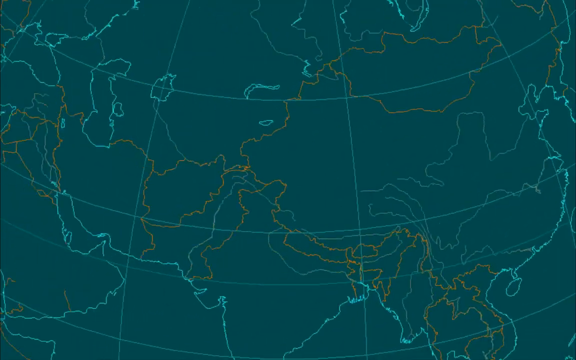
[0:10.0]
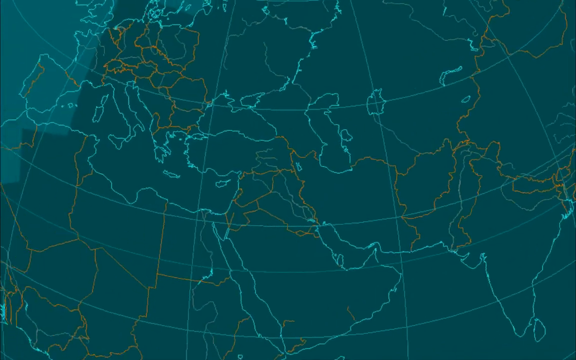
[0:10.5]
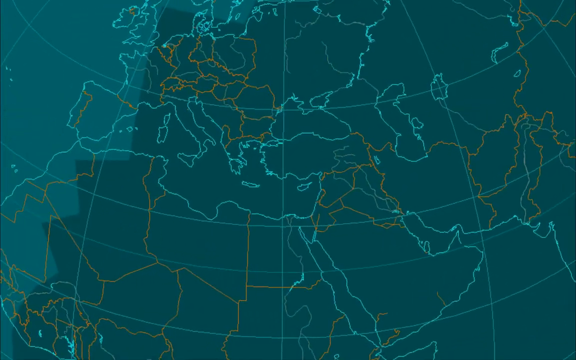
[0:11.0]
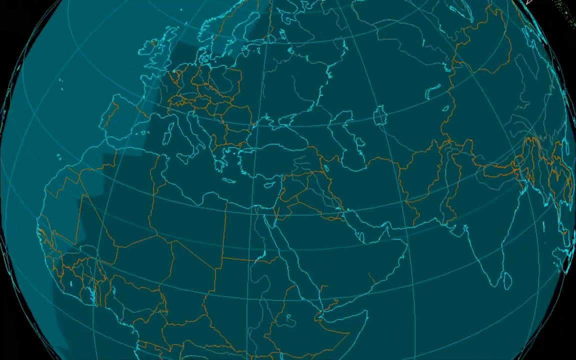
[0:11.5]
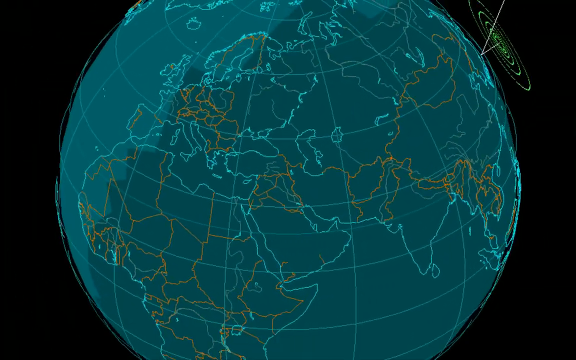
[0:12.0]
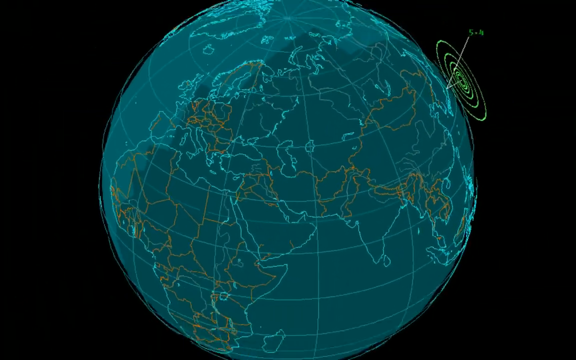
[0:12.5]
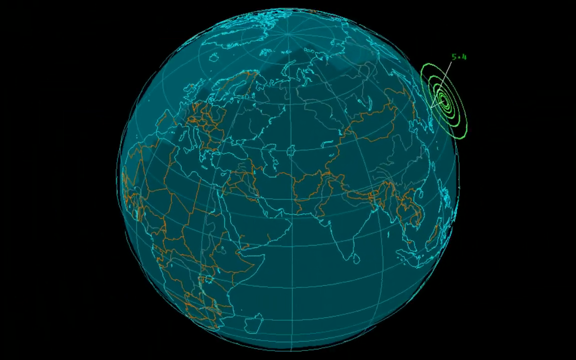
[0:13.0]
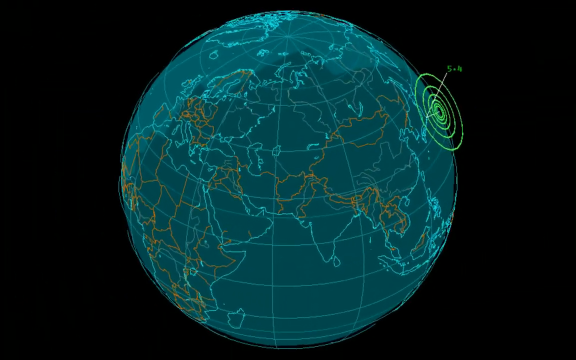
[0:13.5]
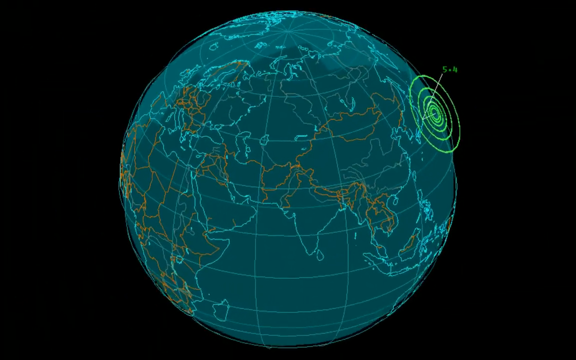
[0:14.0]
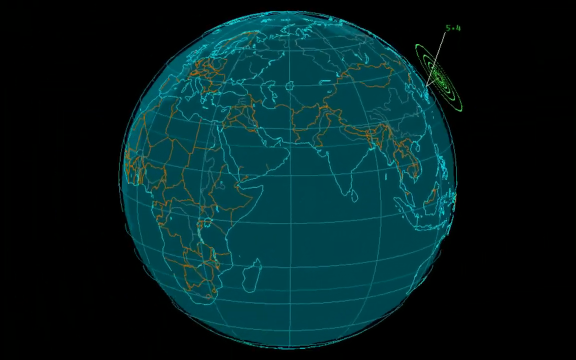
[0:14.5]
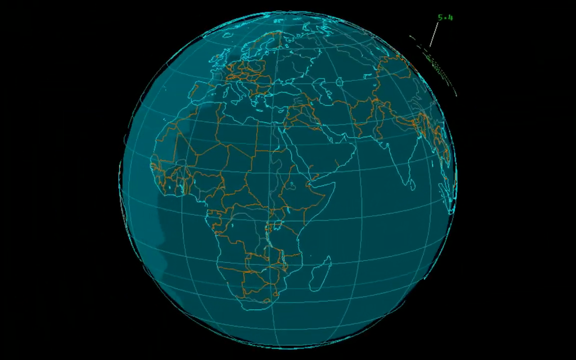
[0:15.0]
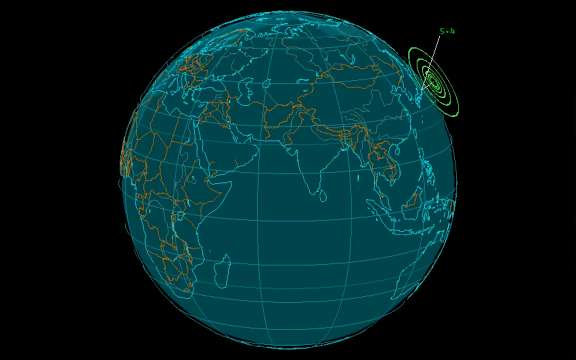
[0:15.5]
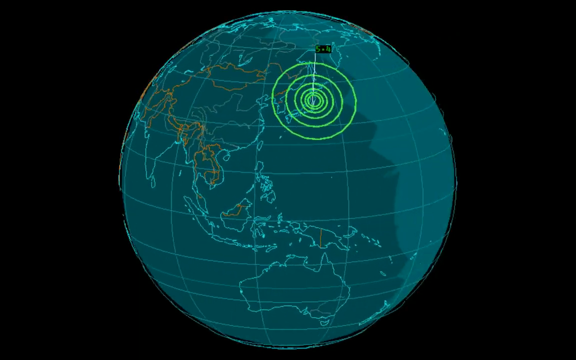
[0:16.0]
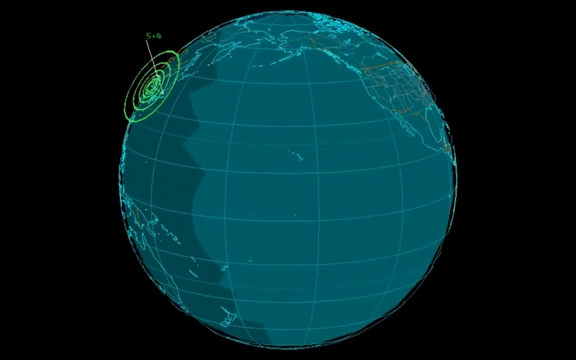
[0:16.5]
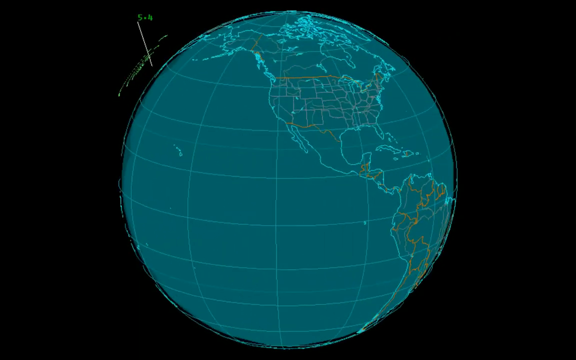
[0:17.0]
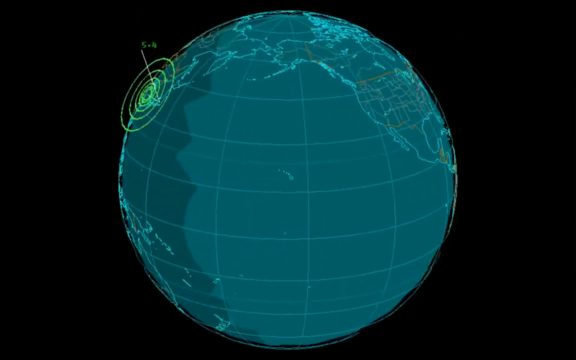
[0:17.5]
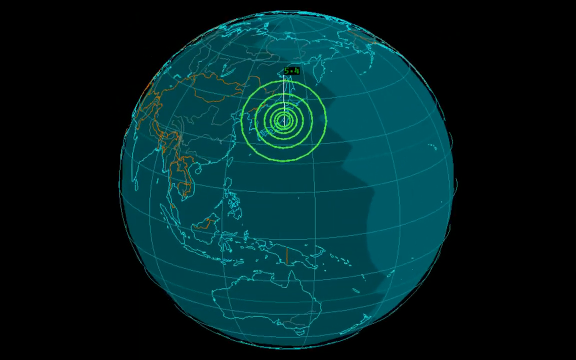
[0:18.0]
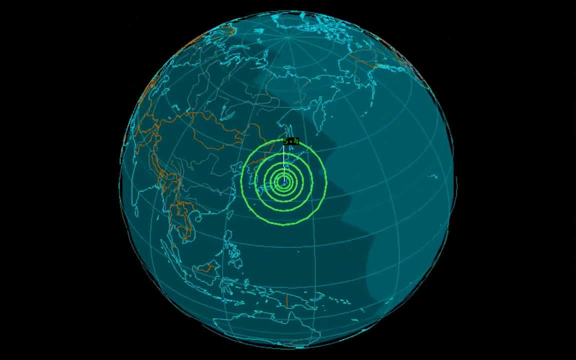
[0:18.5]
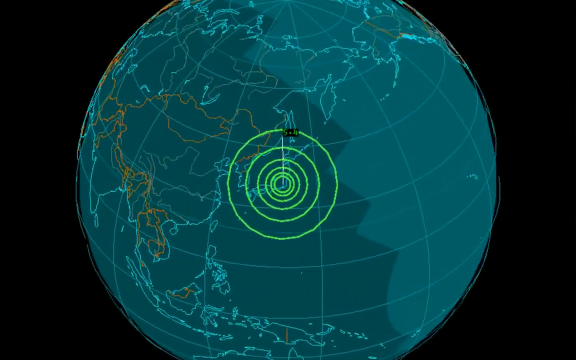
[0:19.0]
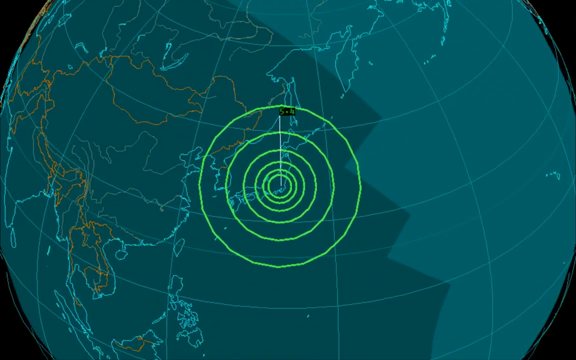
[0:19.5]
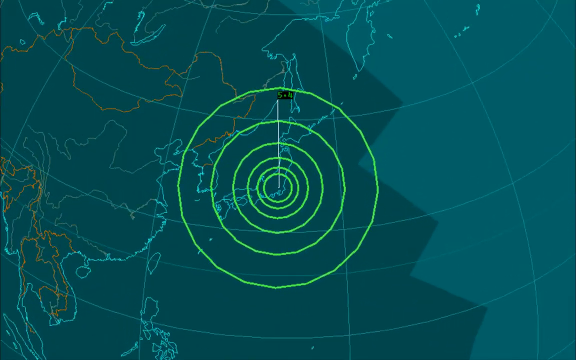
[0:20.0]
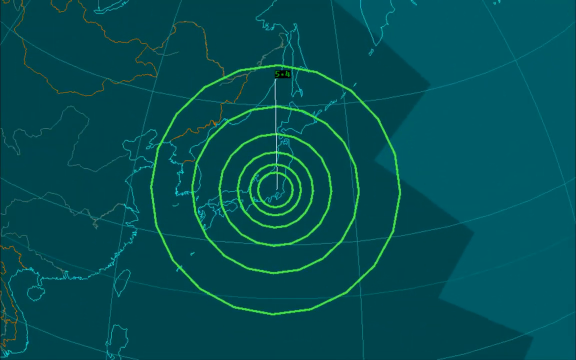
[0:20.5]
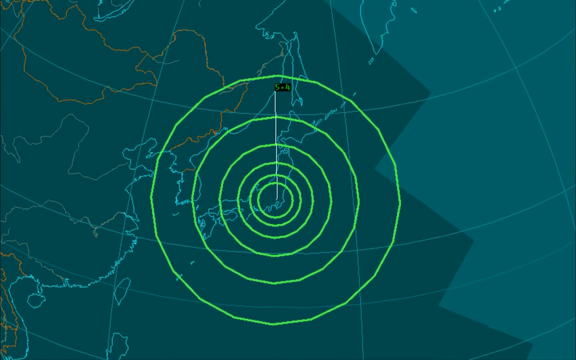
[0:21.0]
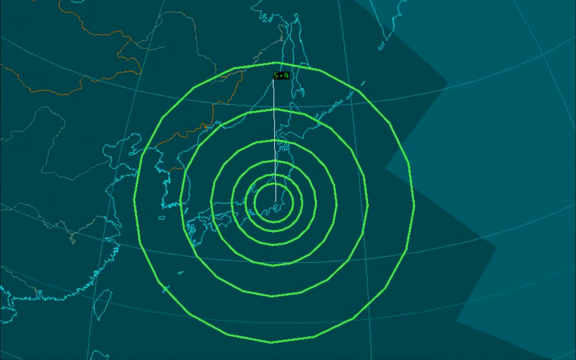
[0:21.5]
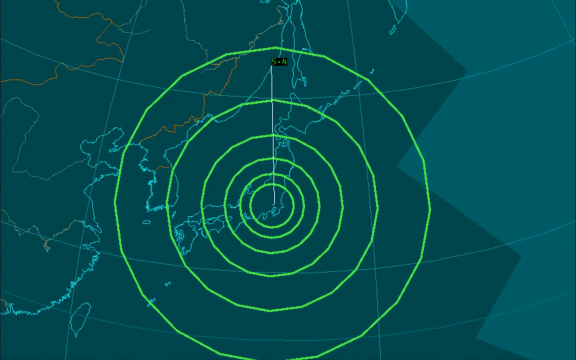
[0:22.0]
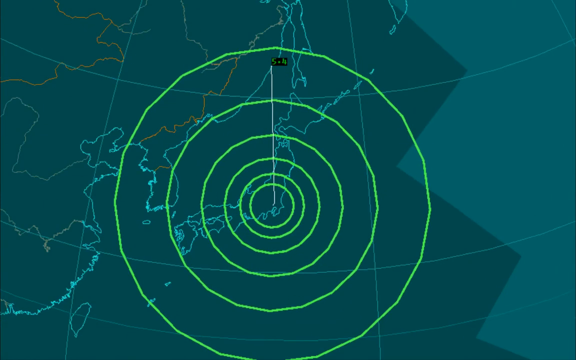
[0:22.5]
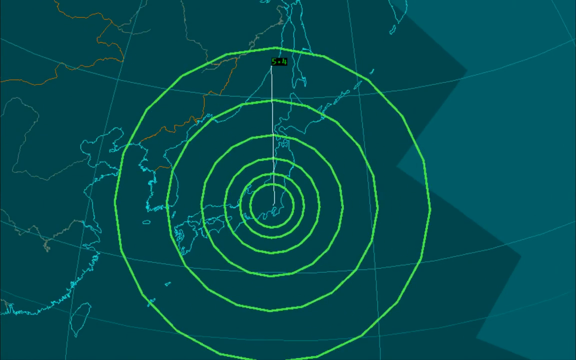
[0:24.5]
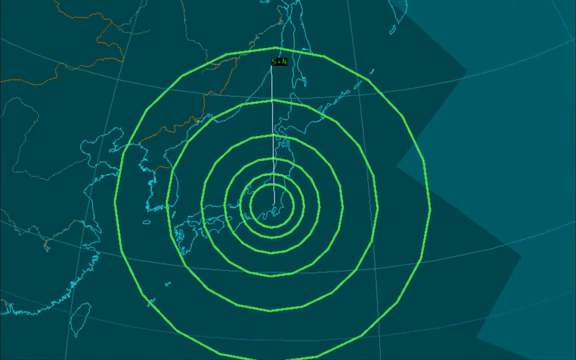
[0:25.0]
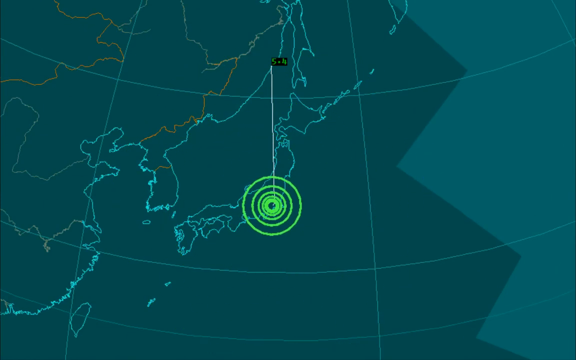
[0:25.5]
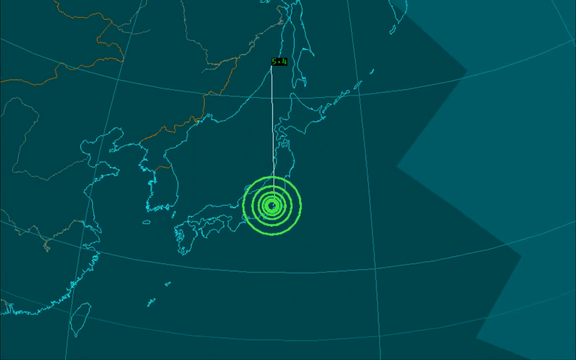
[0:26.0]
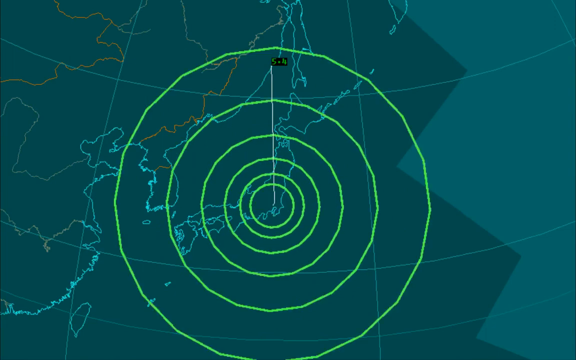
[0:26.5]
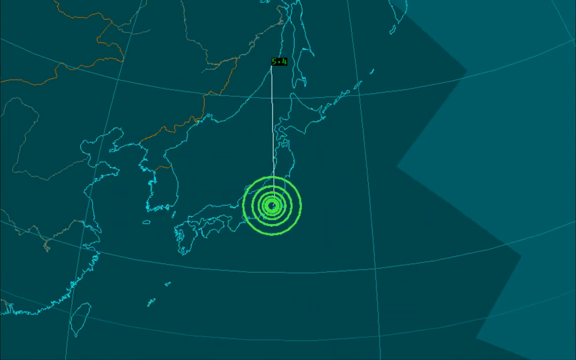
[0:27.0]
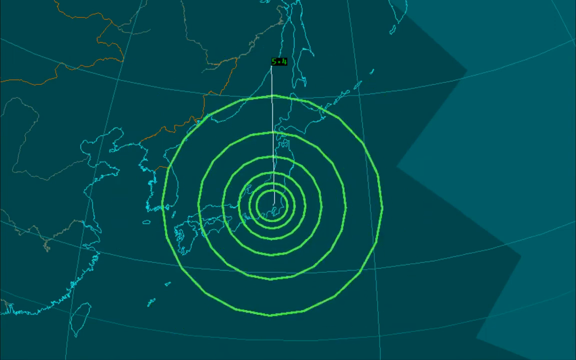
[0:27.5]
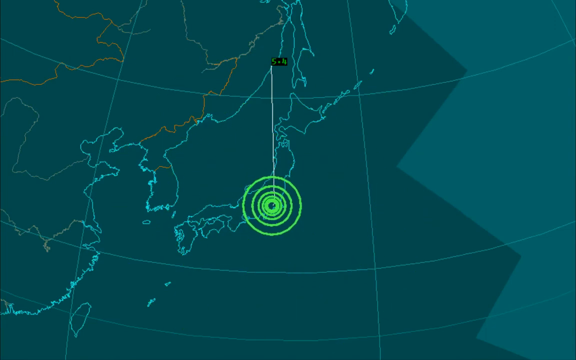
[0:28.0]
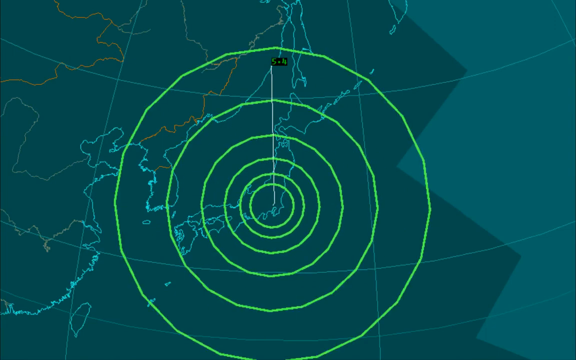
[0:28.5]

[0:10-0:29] The same world map is shown, and it is not clear. Something is marked on the map, but it is unclear which part of the world is shown or indicated.